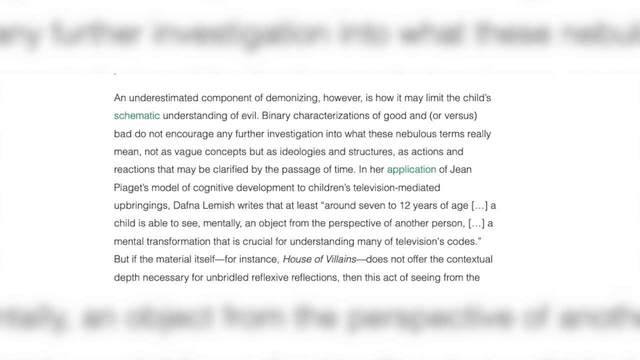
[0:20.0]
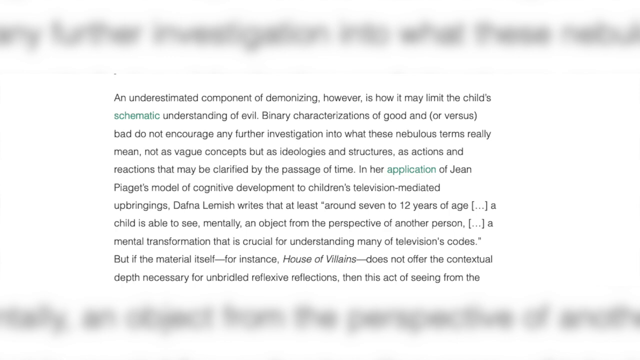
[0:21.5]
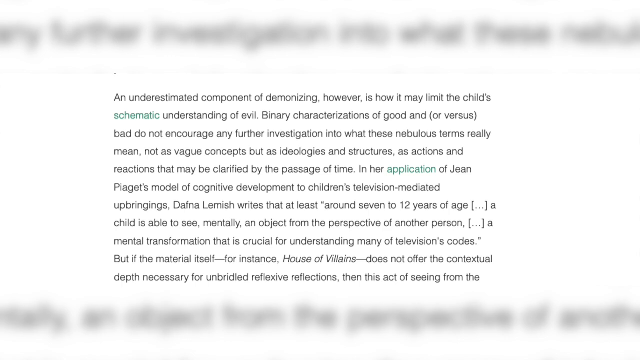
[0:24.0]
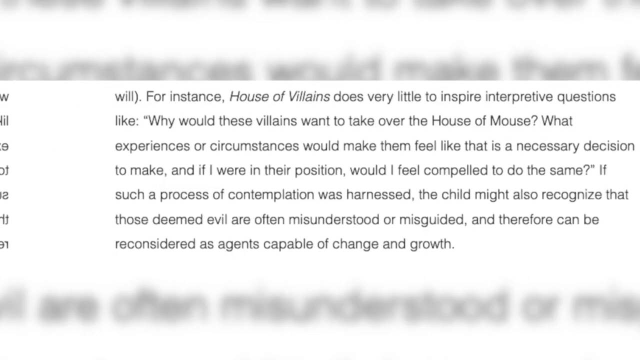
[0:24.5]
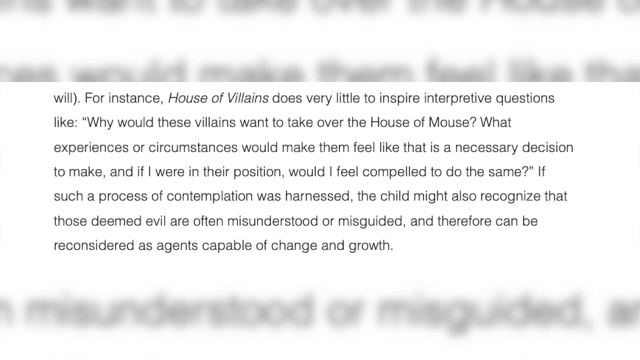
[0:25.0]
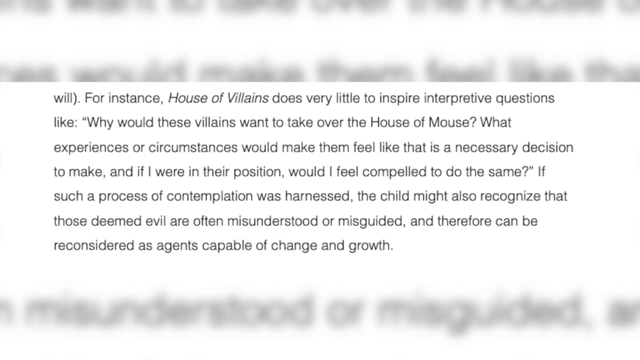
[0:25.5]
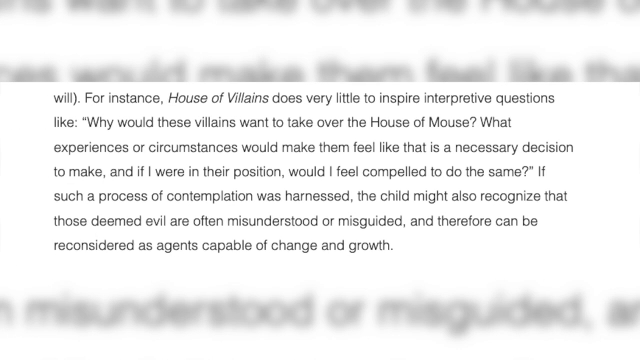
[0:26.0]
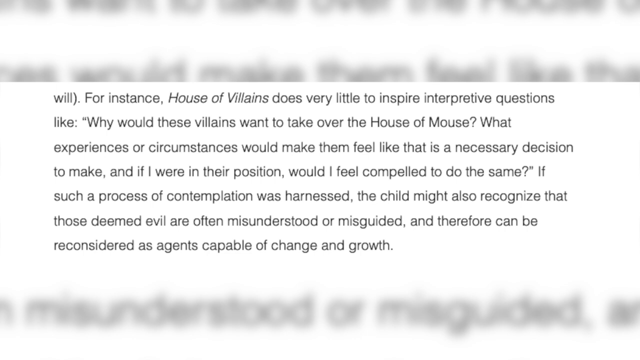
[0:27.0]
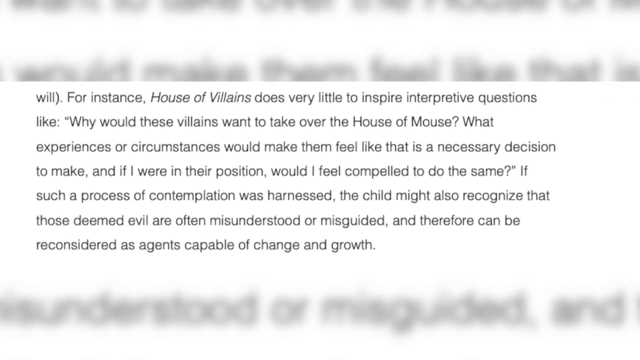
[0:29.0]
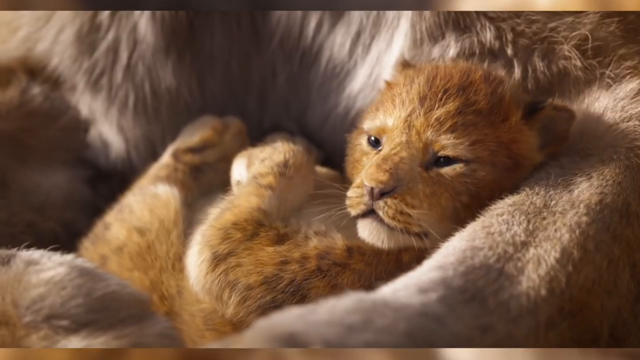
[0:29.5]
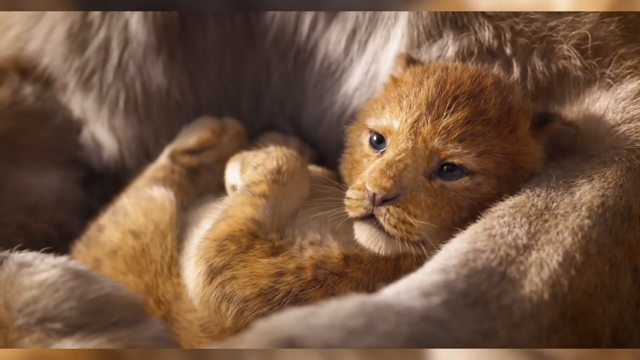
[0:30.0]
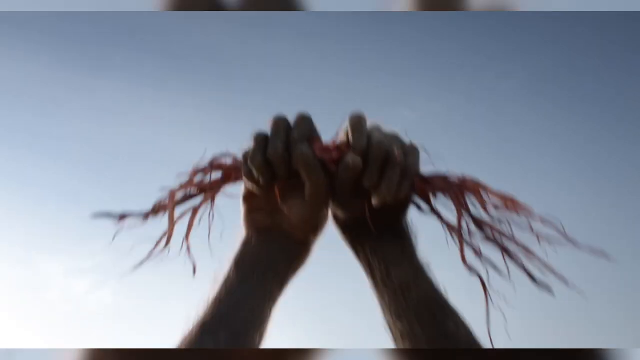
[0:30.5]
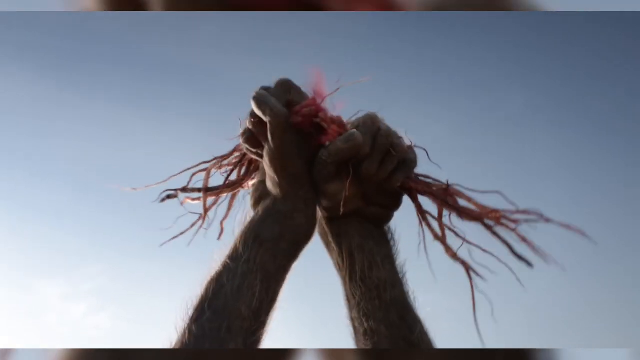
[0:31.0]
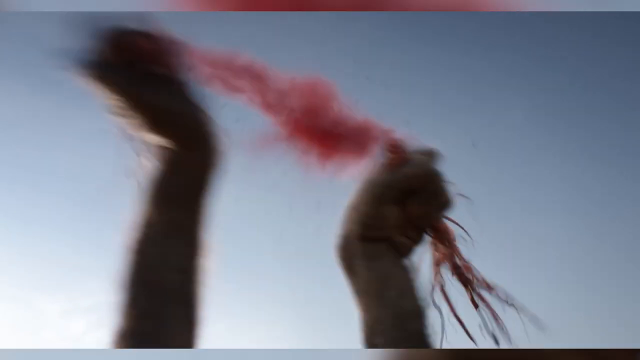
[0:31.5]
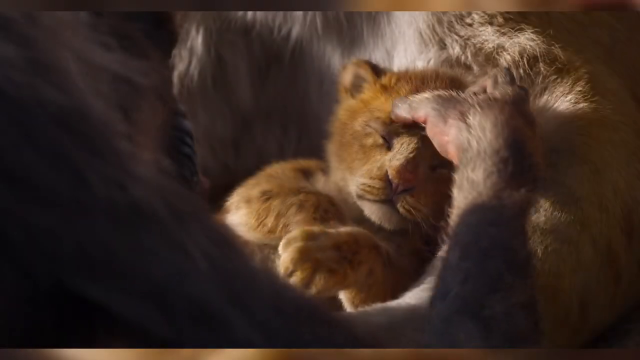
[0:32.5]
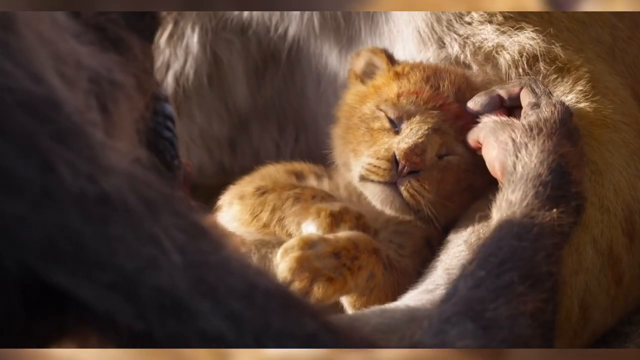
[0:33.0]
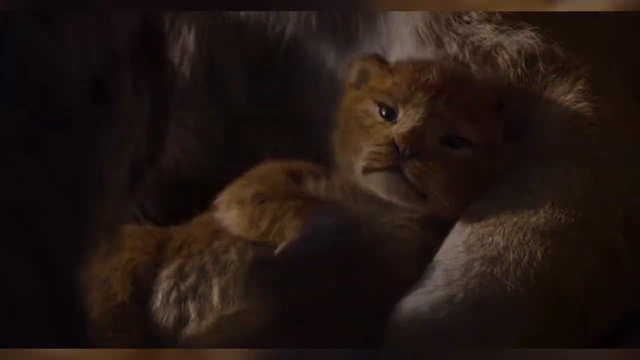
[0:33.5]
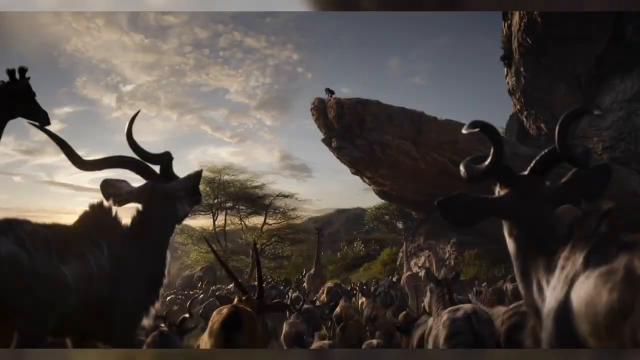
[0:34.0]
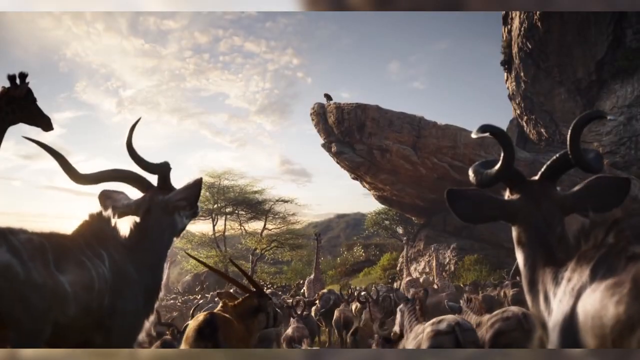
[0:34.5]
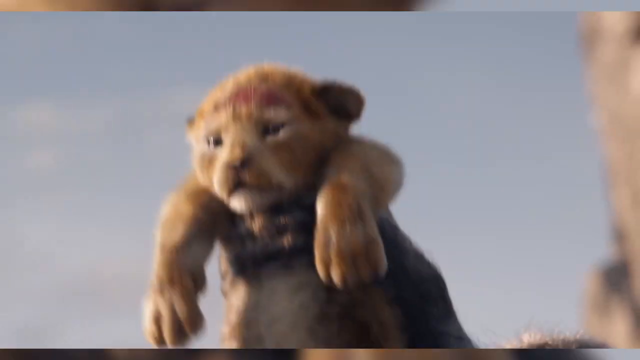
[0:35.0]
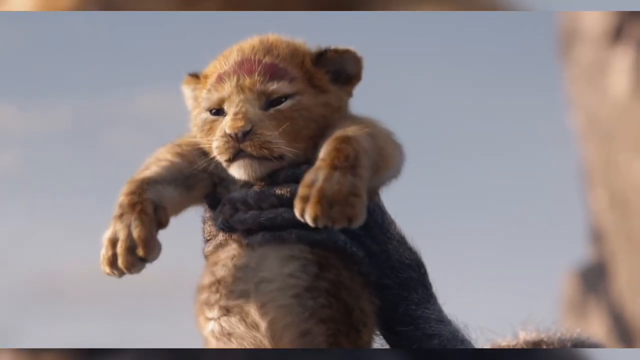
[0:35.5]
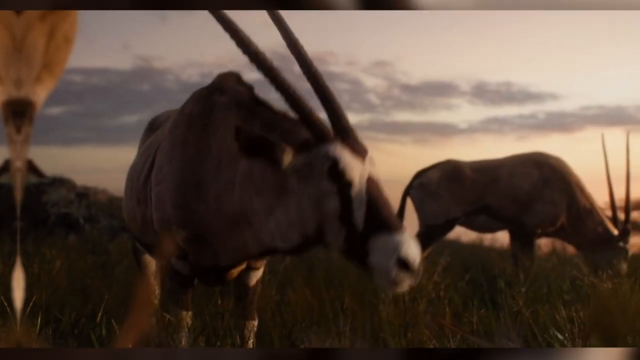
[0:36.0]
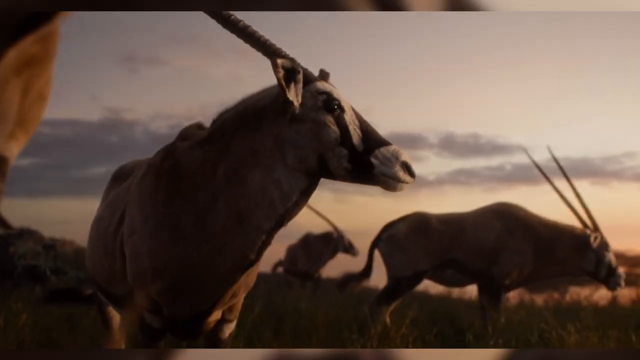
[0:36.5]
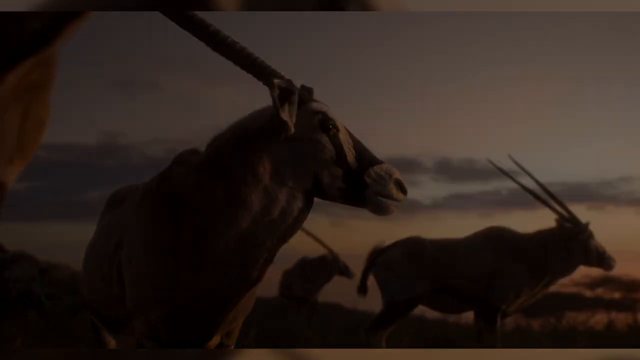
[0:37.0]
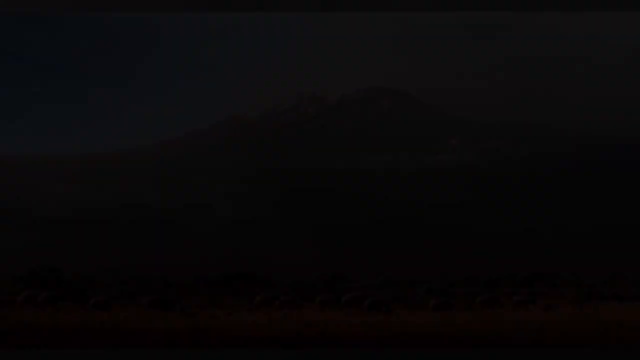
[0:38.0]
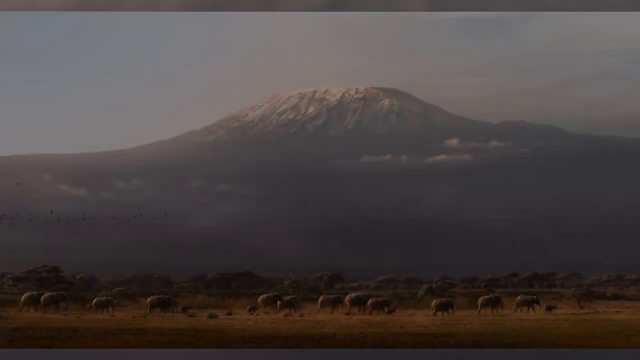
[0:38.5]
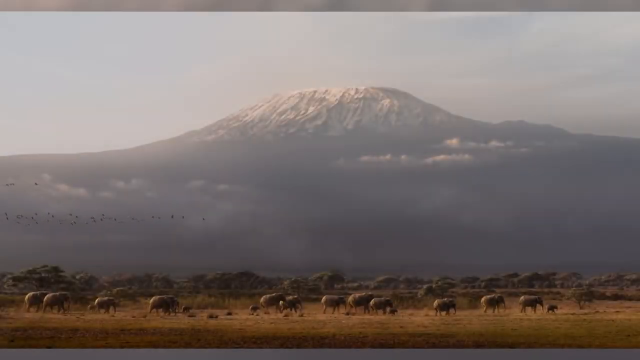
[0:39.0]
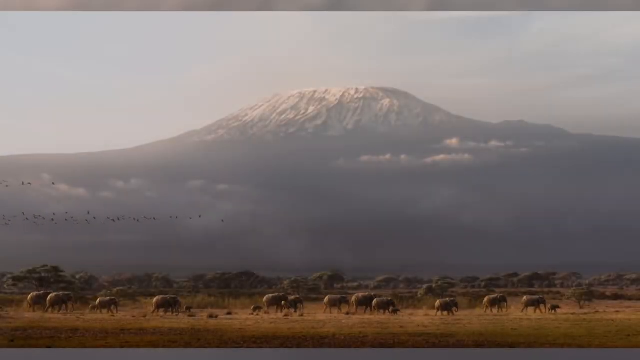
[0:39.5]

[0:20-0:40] An excerpt of text states "an underestimated component of demonizing however is how it may limit the child's schematic understanding of evil," followed by a passage on binary characterization of good versus bad that "do not encourage any further investigation." The text continues "In our application", with the word "application" written in green, going on to mention Jane Paget's model of cognitive development and that "Daphna Lemmich writes" that around 7 to 12 years of age "a child is able to see mentally an object from the perspective of another person." The rest of the text is written in black. The video then transitions to a golden light brown cub lying down in a field. A hand breaks a bark of roots; the root is red, and once it is torn in two it produces a mist. The cub is shown lying down as a baboon drops the broken bark on its forehead. Various animals look up toward a rocky mountain as the cub is lifted up by the baboon. The video then transitions to a snowy mountain.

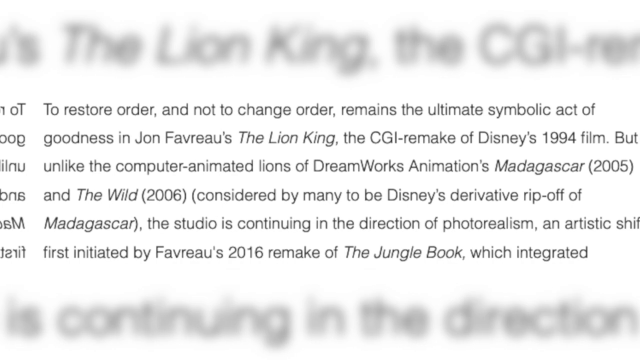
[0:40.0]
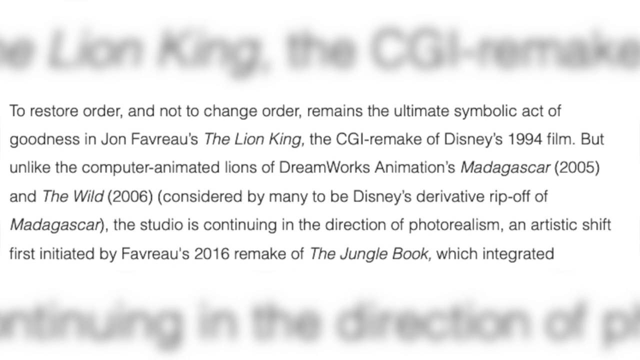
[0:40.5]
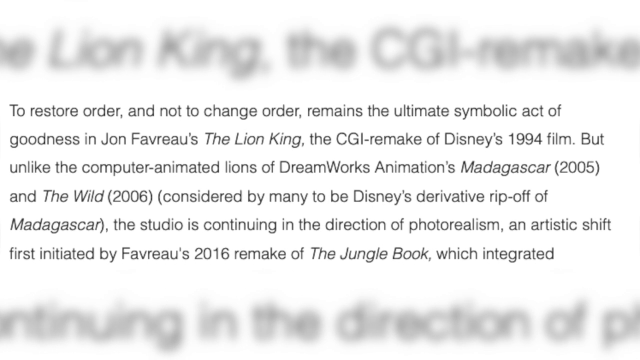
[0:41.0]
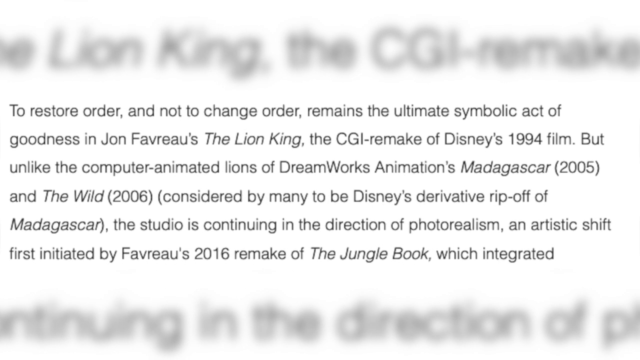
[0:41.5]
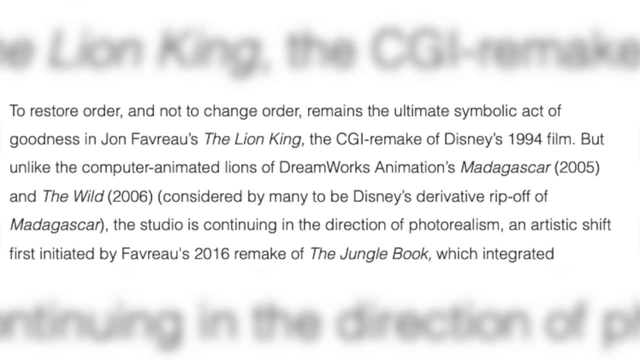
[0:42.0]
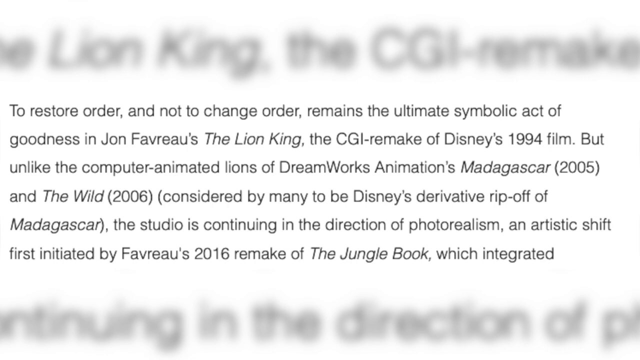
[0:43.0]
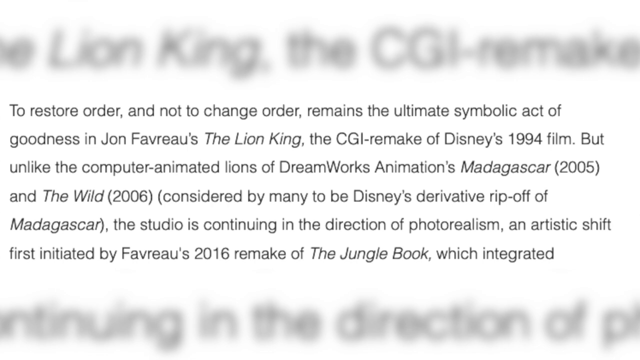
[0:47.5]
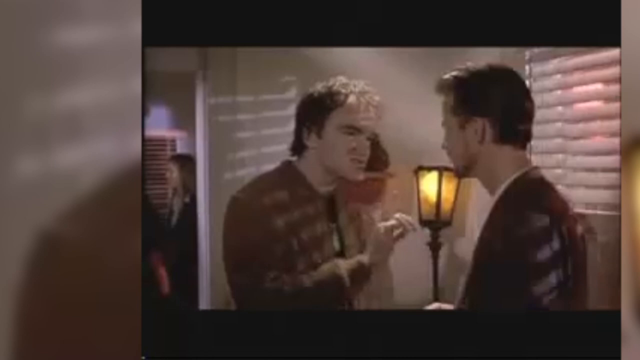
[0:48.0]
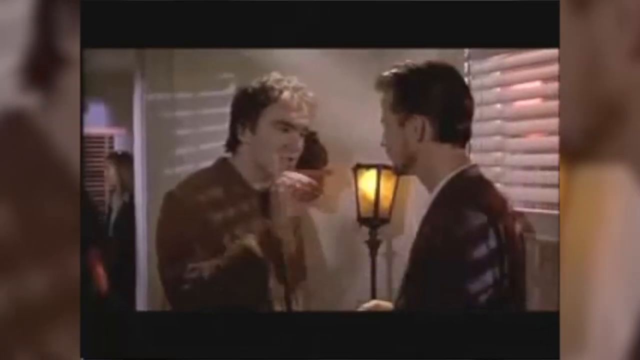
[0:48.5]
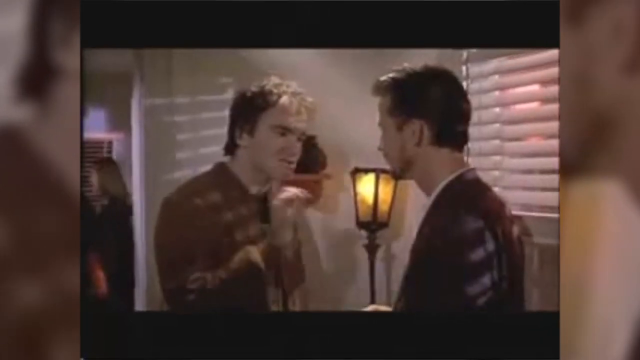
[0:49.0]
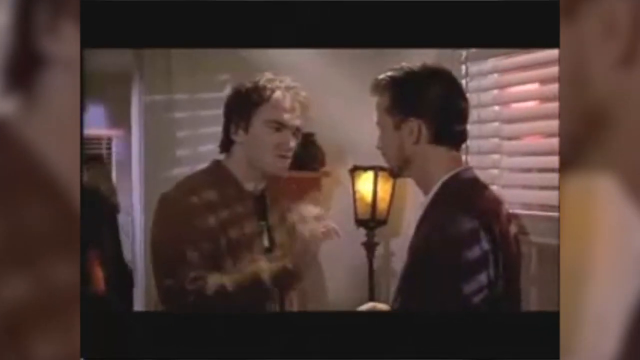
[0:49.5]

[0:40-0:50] Text written in black on a white background states "to restore order and not to change order, remains the ultimate symbolic act of goodness in John Favreau's The Lion King, the CGI remake of Disney's 1994 film." The text continues, mentioning DreamWorks Animation's Madagascar (2005) and The Wild (2006), and that "the studio is continuing in the direction of photorealism." The video then transitions to two men having a conversation in a room. In the background there is a lit lamp and window blinds. Both men are wearing suits. The video then transitions back to the text image.